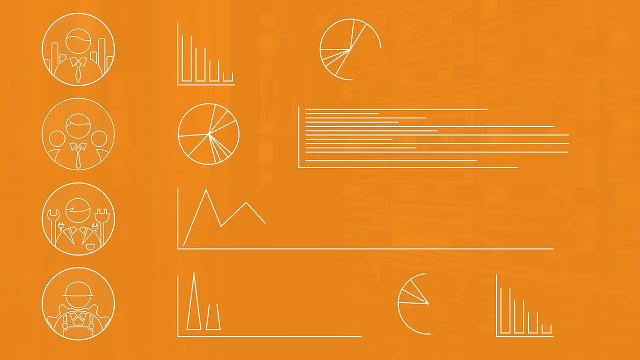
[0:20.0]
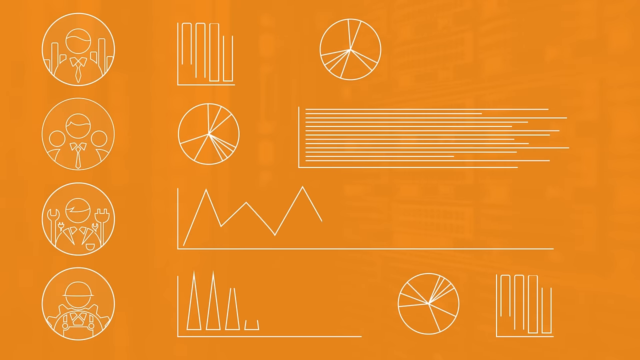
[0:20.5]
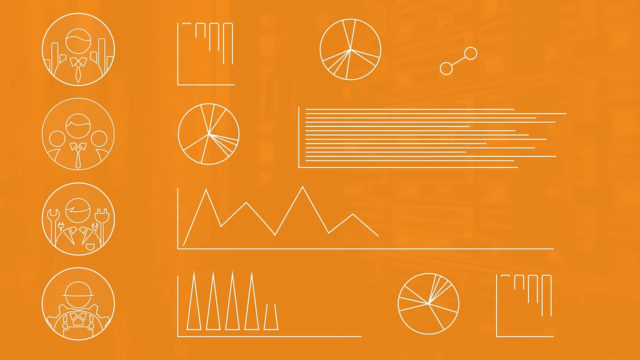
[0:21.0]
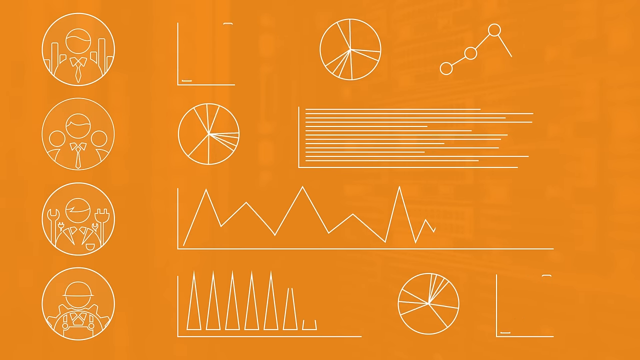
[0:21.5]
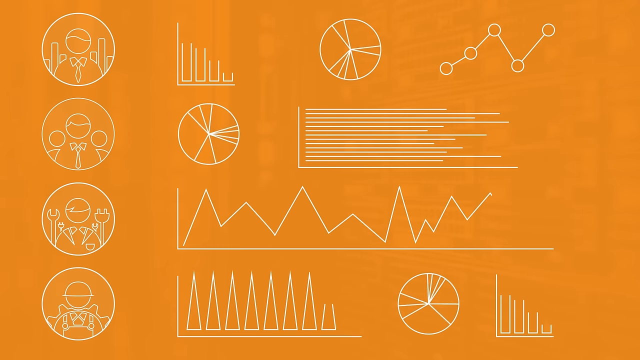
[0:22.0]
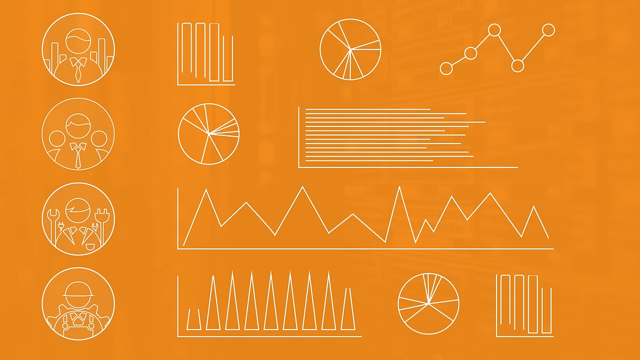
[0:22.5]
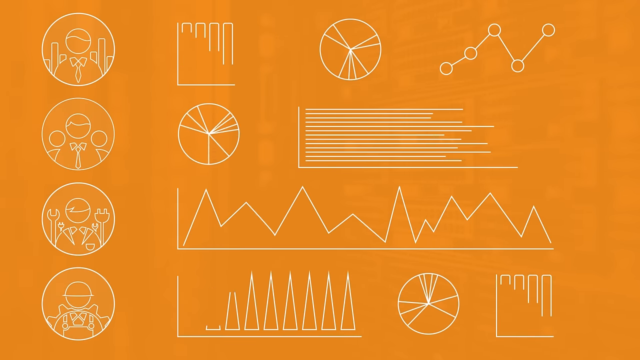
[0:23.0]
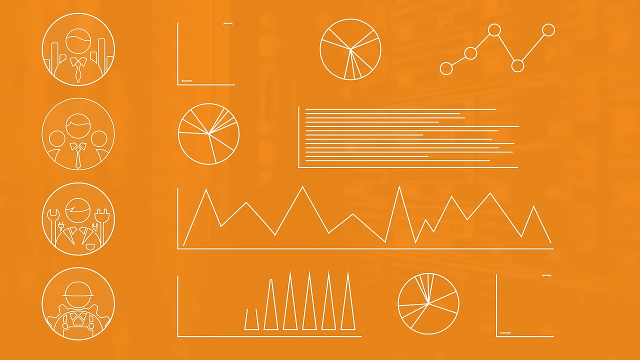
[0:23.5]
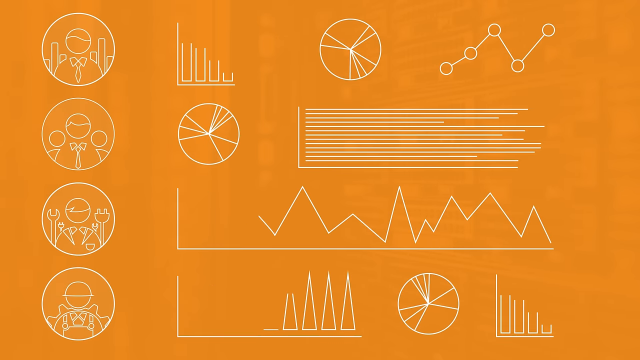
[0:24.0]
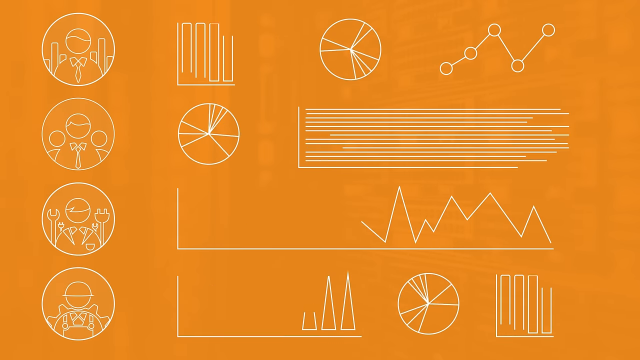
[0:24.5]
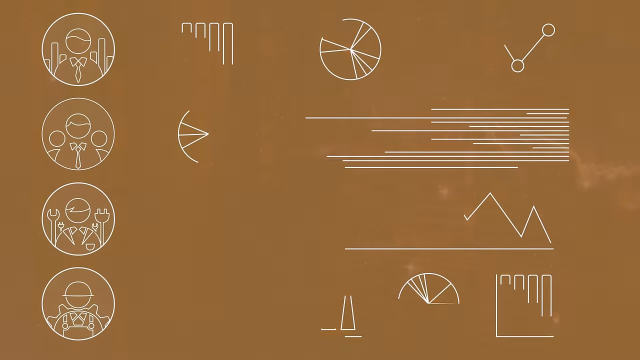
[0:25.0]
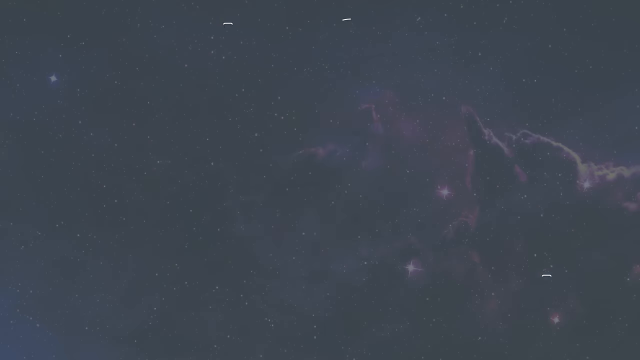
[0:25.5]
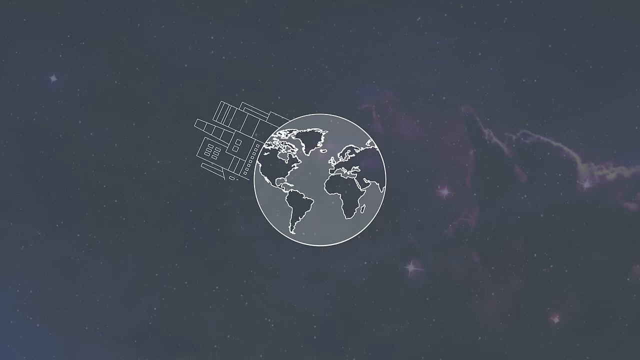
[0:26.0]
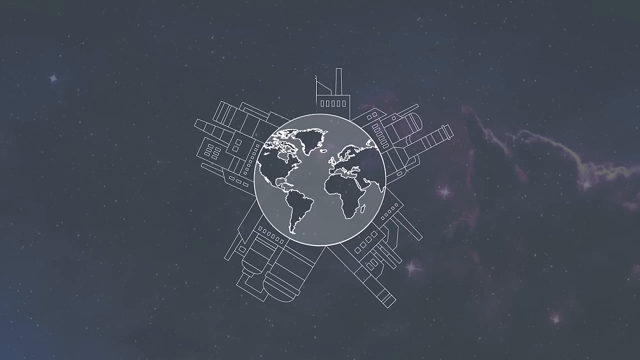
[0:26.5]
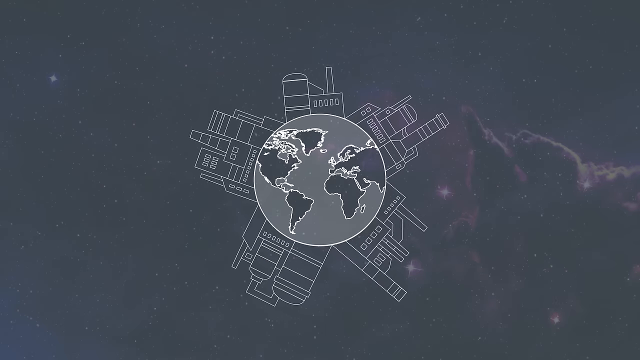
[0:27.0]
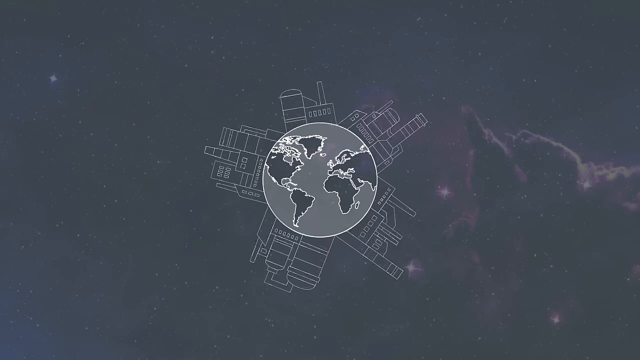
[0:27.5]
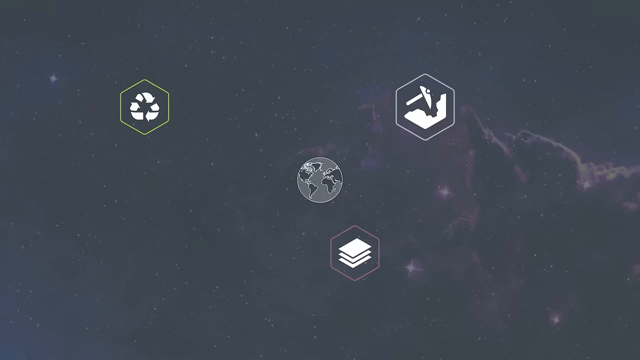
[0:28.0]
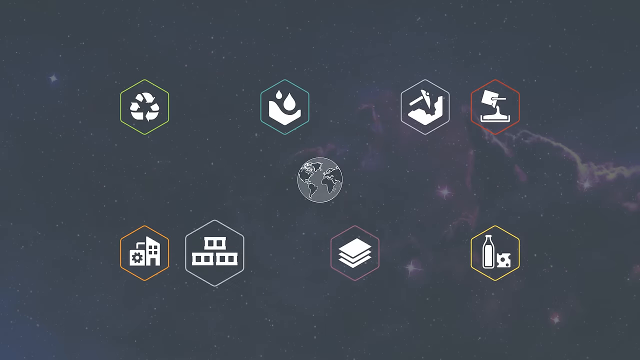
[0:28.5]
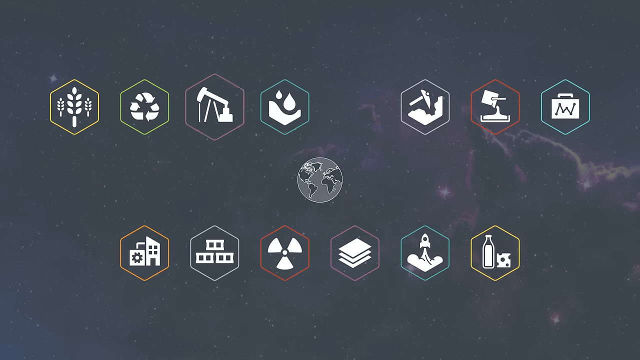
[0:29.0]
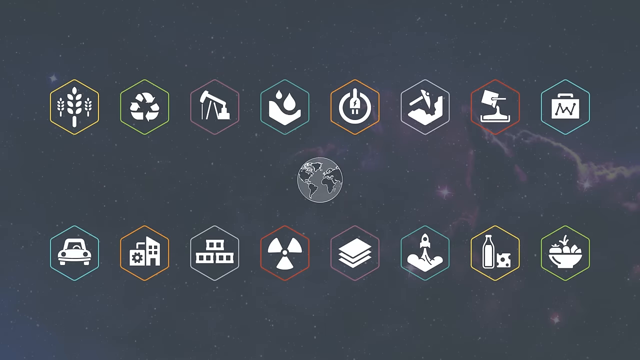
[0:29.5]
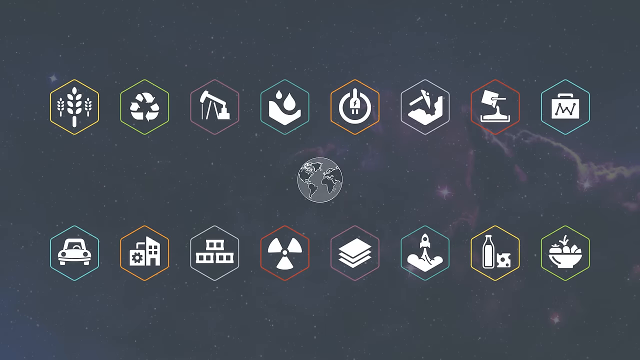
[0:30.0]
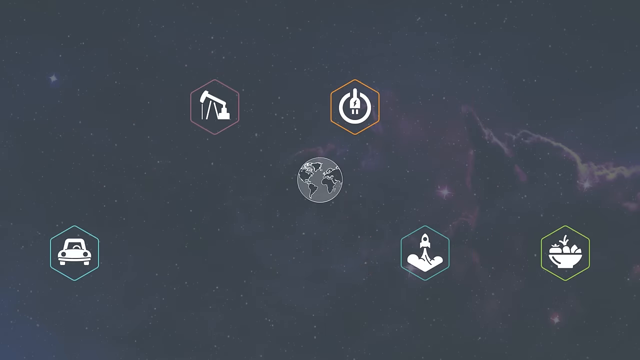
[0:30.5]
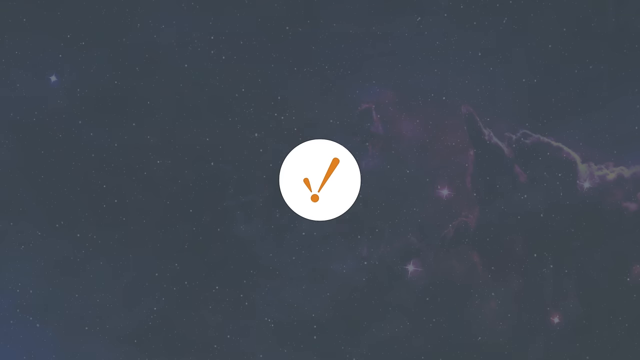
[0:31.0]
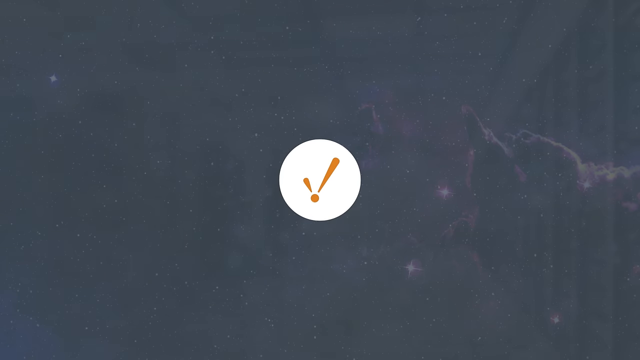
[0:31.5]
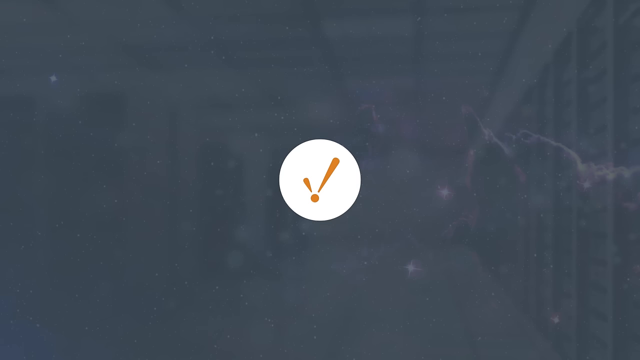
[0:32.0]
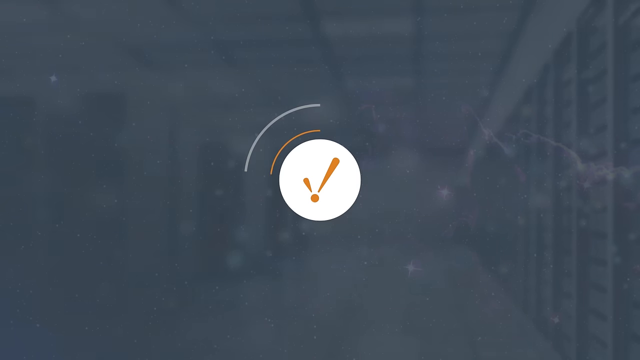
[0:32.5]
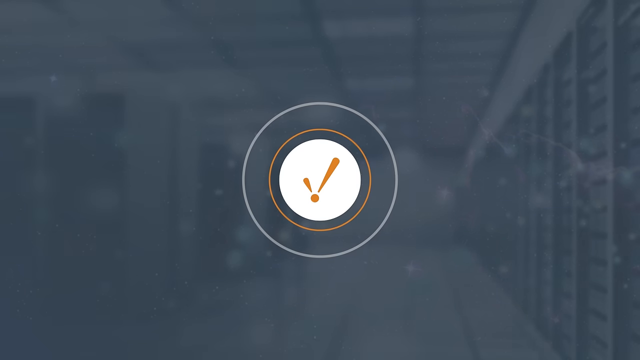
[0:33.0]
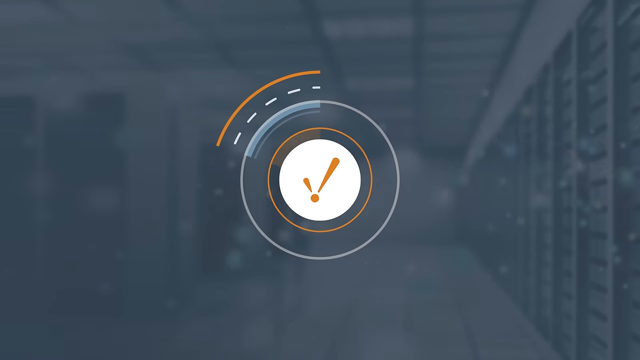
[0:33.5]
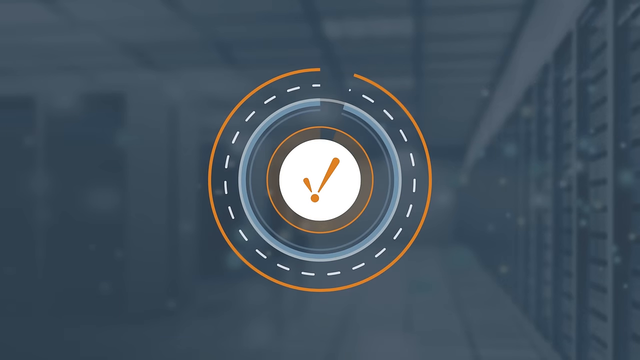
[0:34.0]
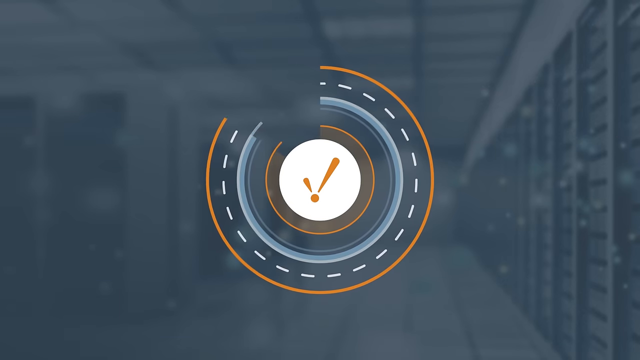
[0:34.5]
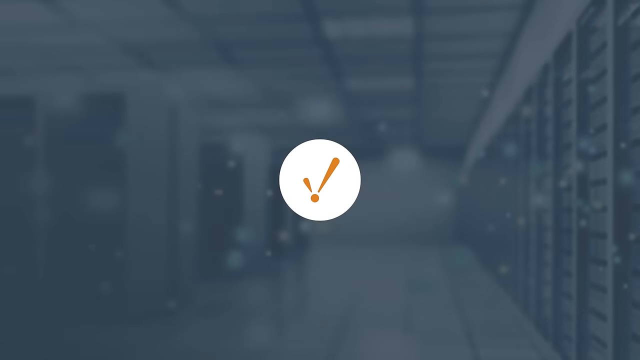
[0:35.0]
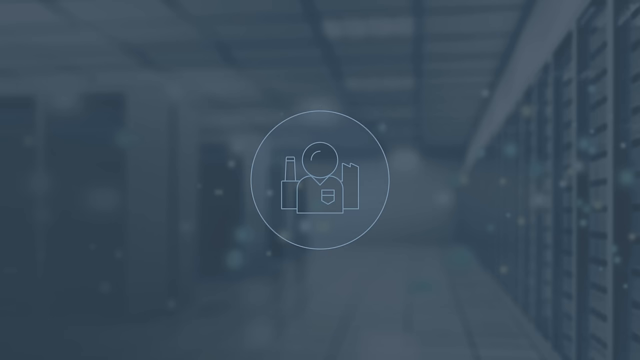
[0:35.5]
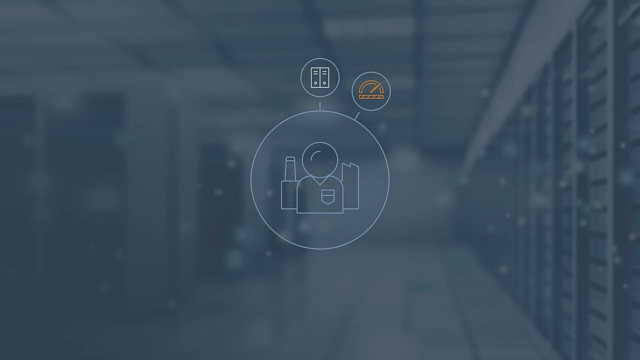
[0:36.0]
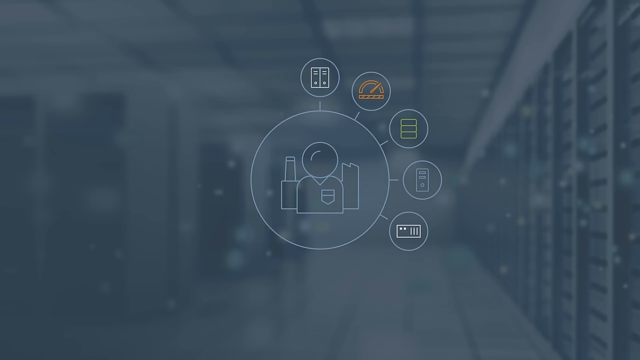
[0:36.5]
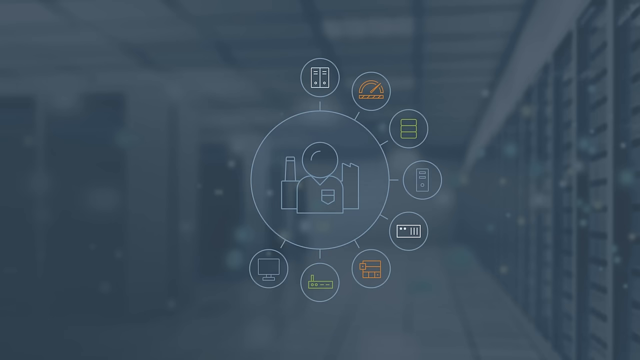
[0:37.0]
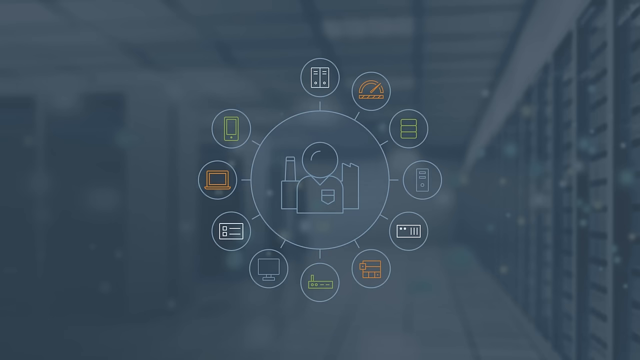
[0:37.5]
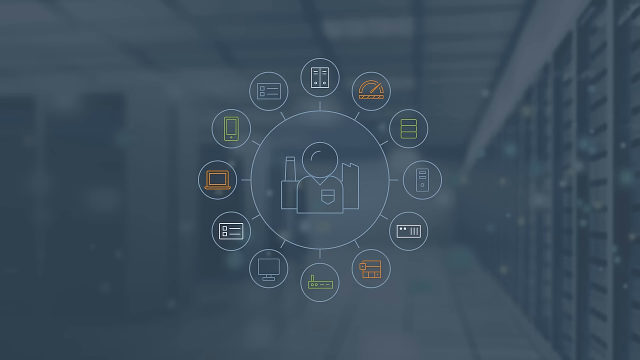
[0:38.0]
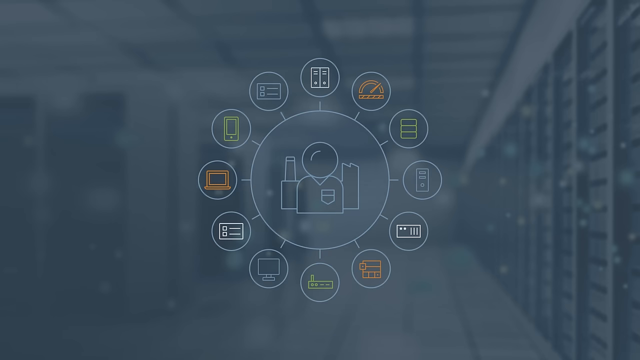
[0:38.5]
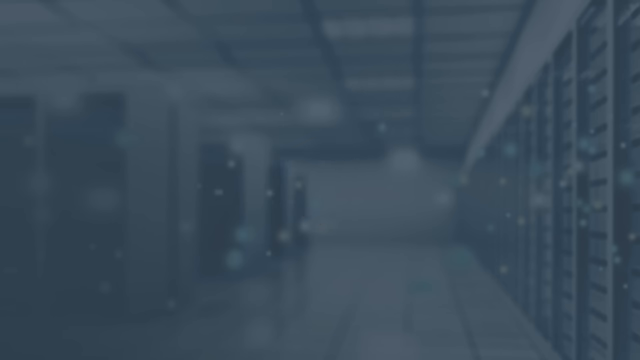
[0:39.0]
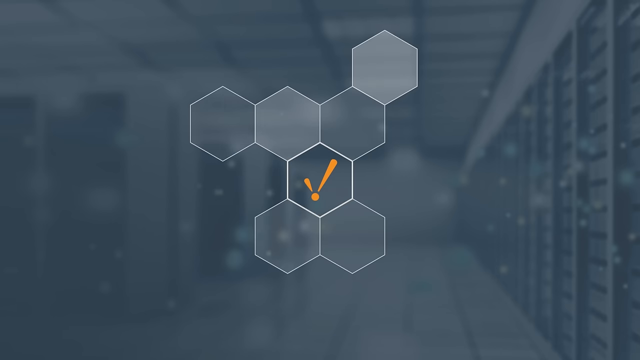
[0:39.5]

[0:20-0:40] On the left side, people appear in circles. Everything is animated. This gives way to pie charts, graphs and bar graphs, and then to a black screen. The black screen begins with a drawing of a globe that branches off into different things. Hexagonal shapes move about, each with a different design inside, spread across the entire screen in two lines, one above the earth and one below it. All of this fades into a circle on a black screen, which turns into a check mark. The check mark fades, and hexagonal shapes appear, this time taking up the whole screen.